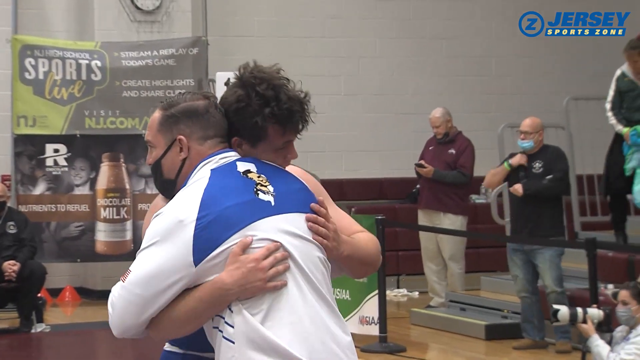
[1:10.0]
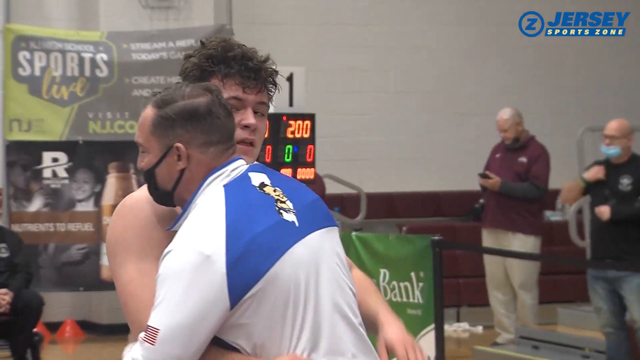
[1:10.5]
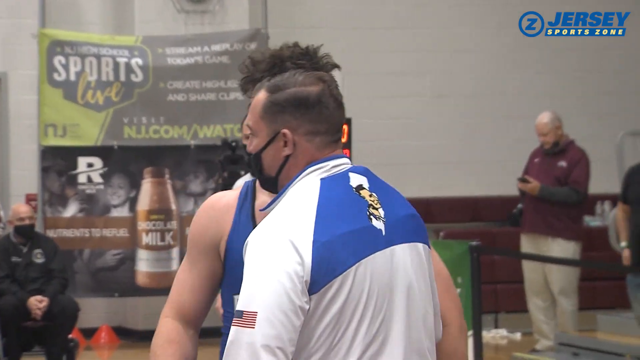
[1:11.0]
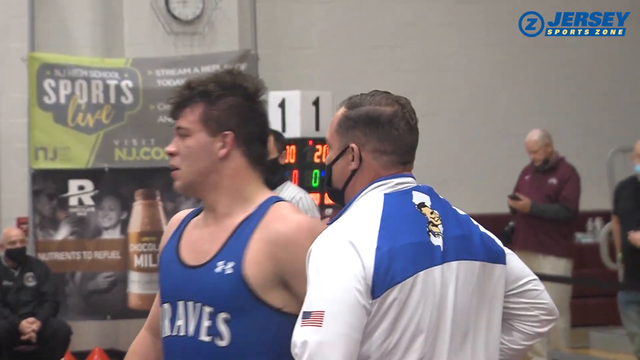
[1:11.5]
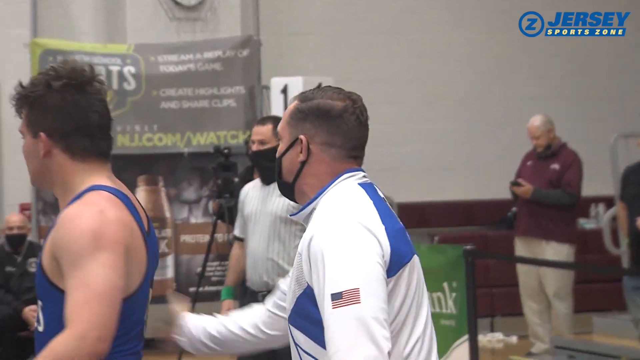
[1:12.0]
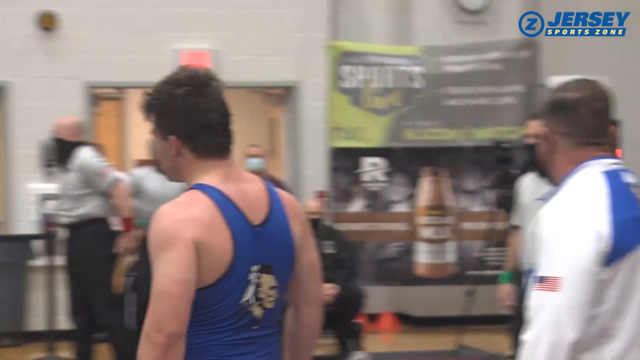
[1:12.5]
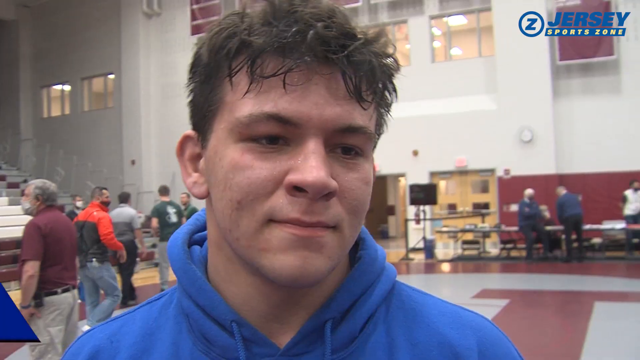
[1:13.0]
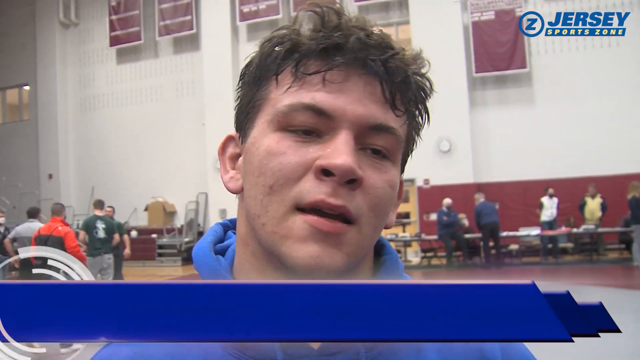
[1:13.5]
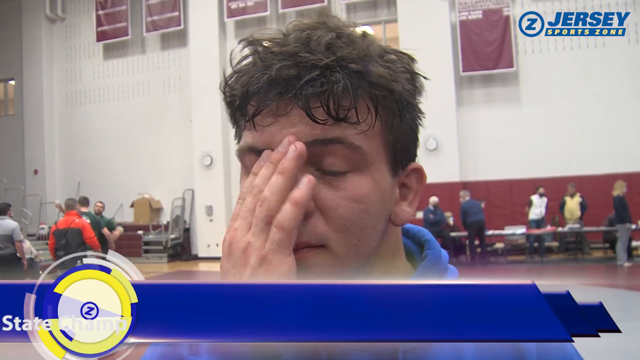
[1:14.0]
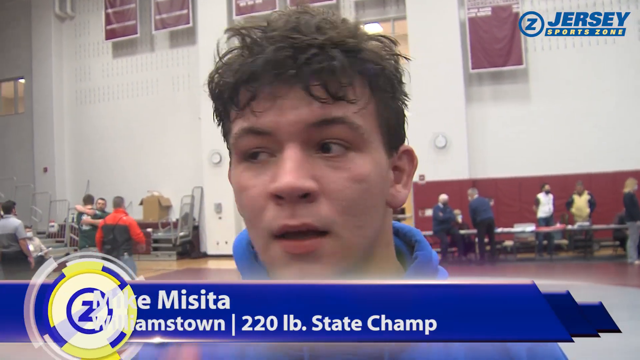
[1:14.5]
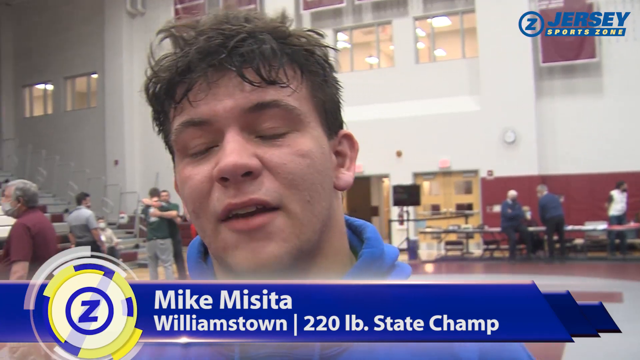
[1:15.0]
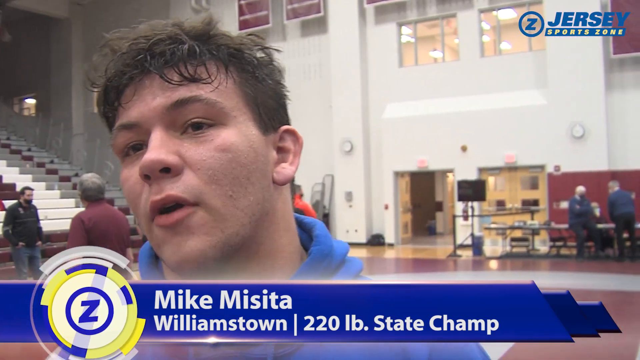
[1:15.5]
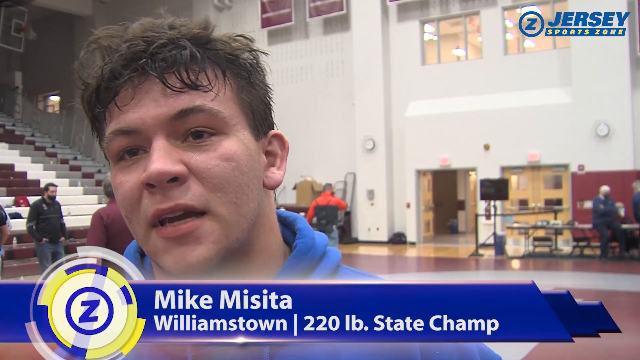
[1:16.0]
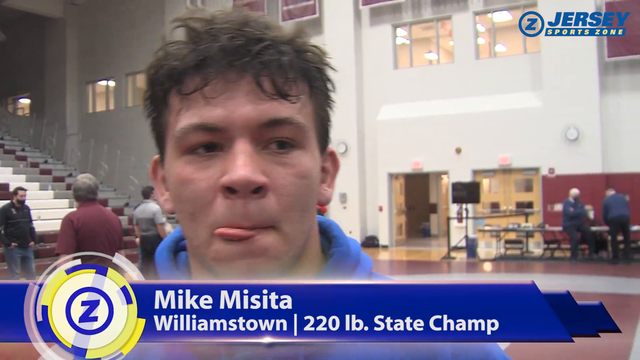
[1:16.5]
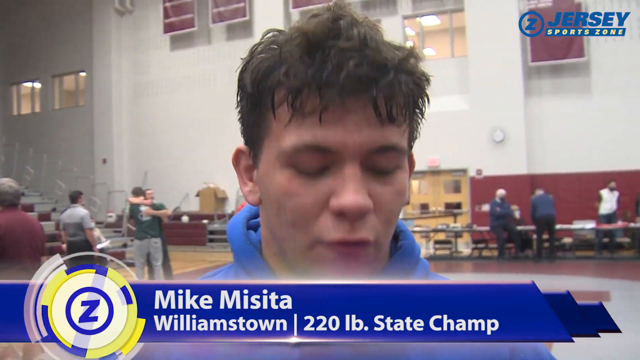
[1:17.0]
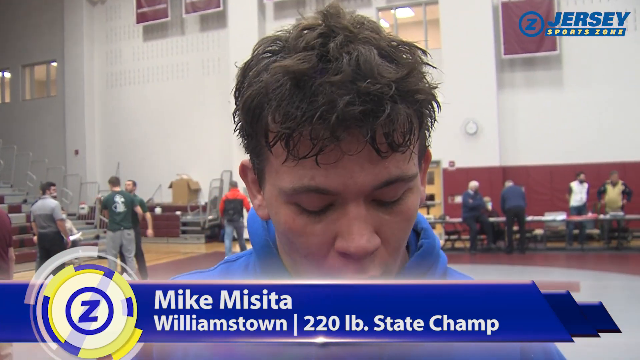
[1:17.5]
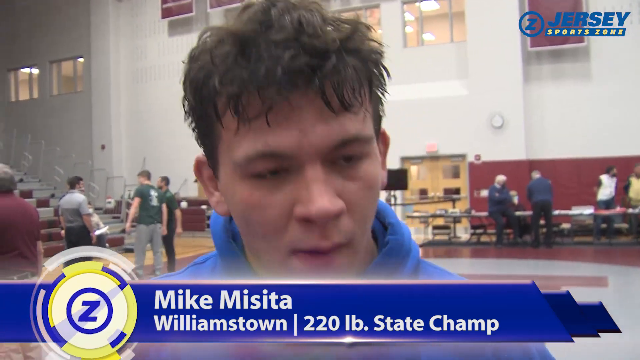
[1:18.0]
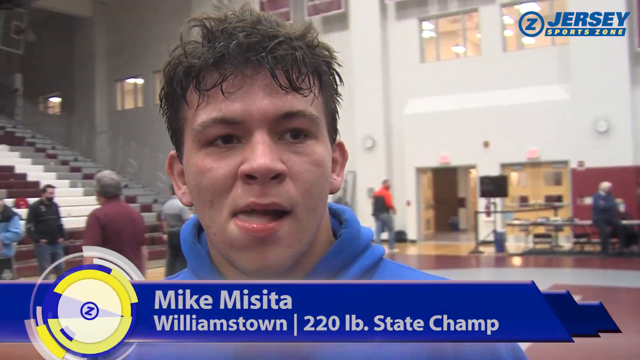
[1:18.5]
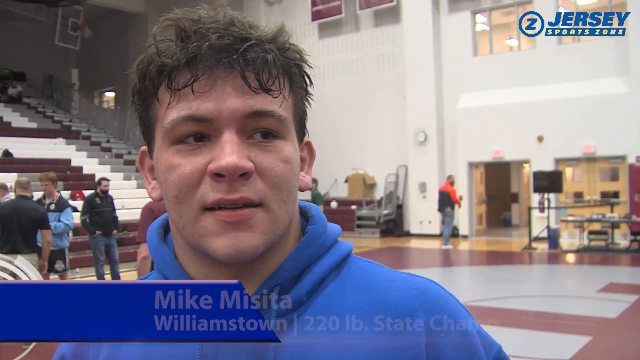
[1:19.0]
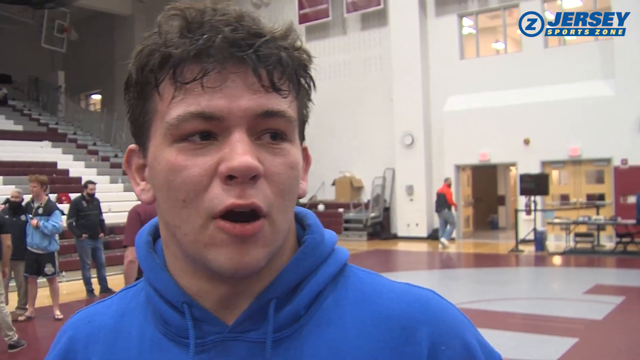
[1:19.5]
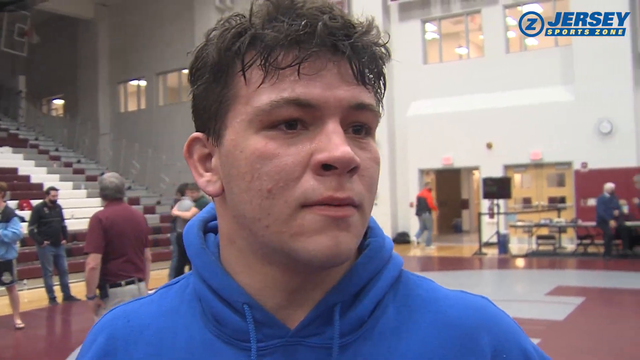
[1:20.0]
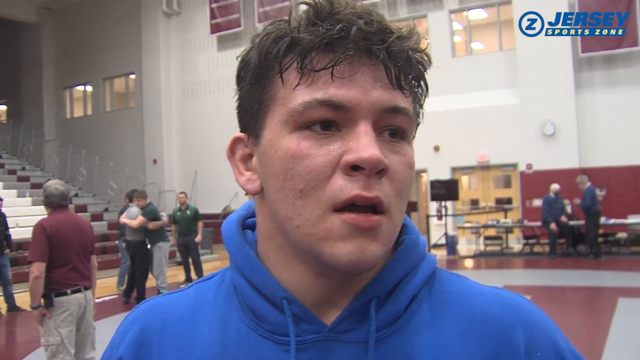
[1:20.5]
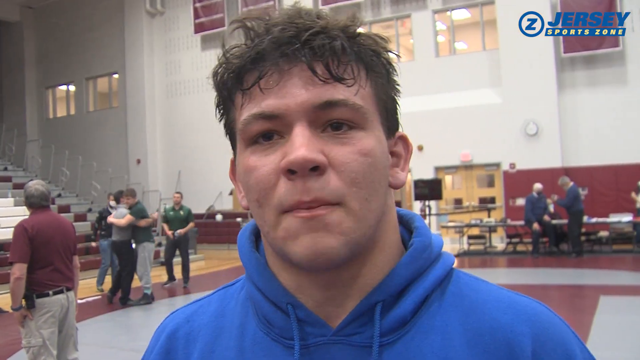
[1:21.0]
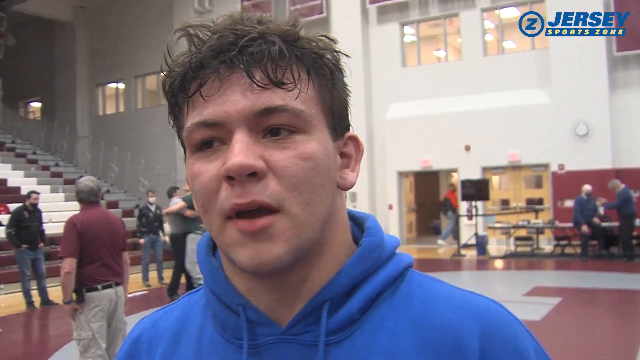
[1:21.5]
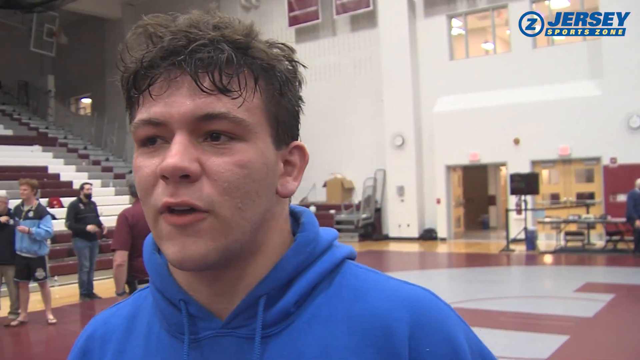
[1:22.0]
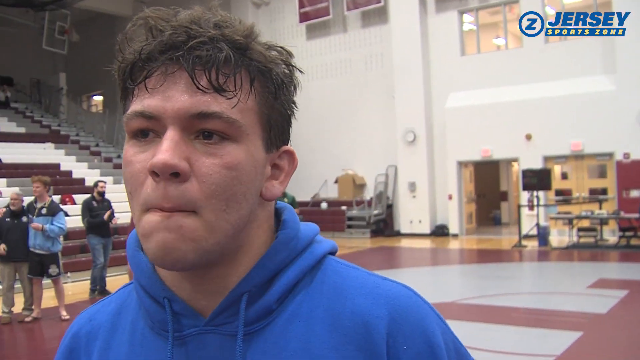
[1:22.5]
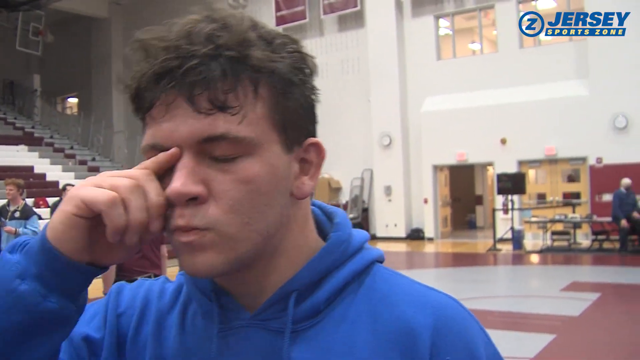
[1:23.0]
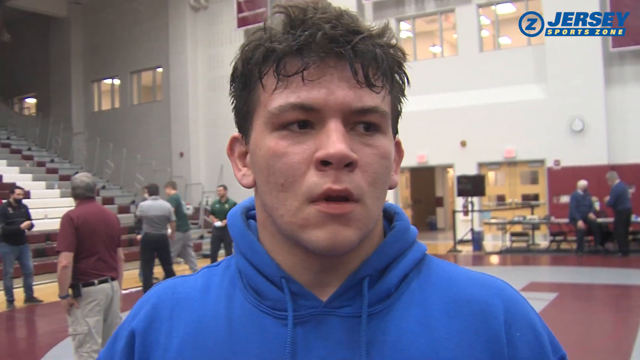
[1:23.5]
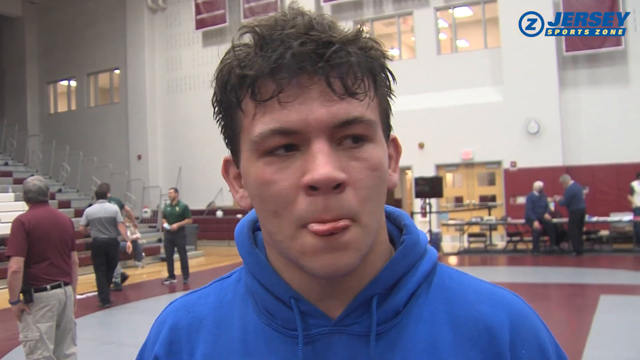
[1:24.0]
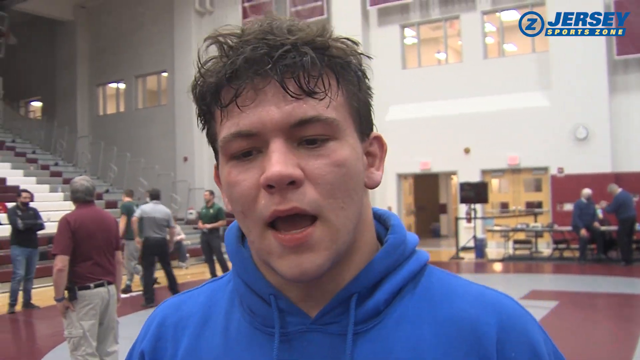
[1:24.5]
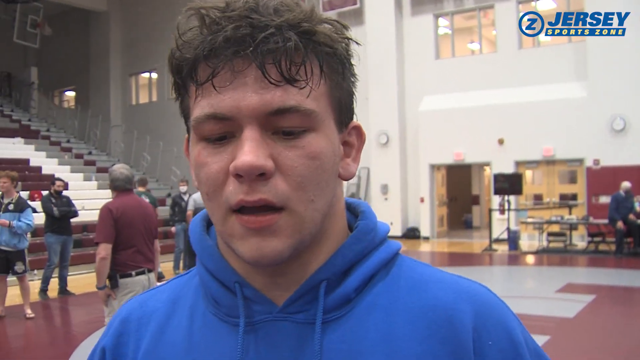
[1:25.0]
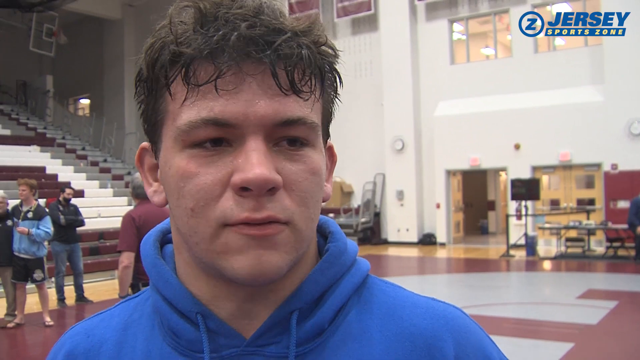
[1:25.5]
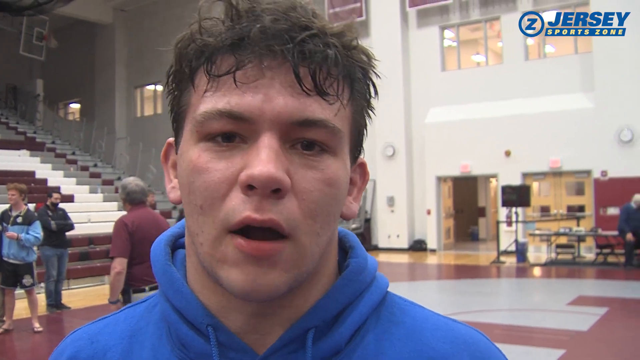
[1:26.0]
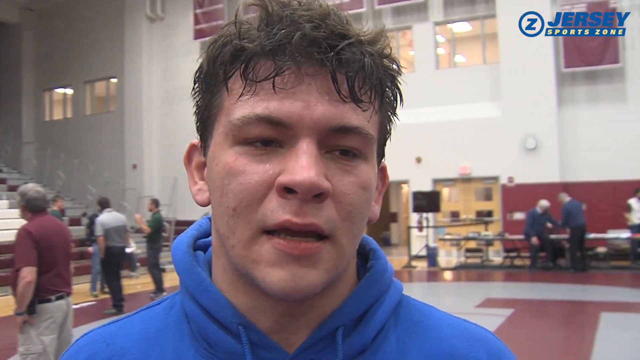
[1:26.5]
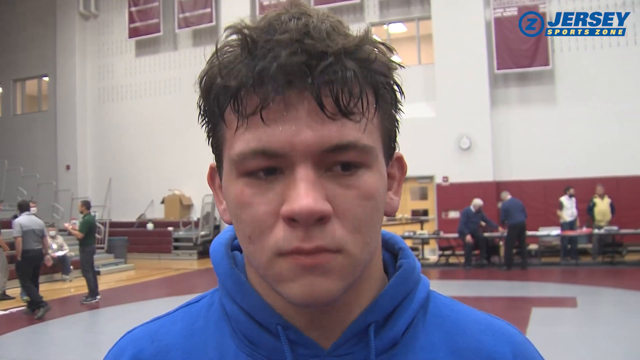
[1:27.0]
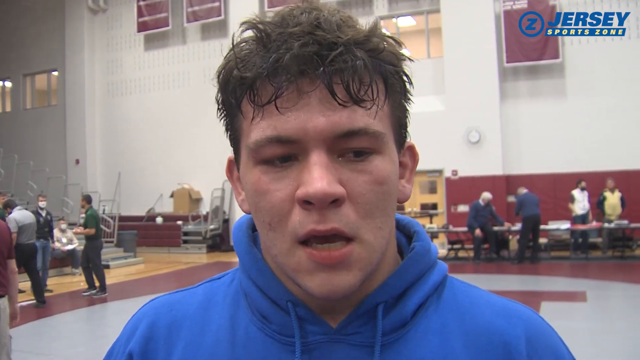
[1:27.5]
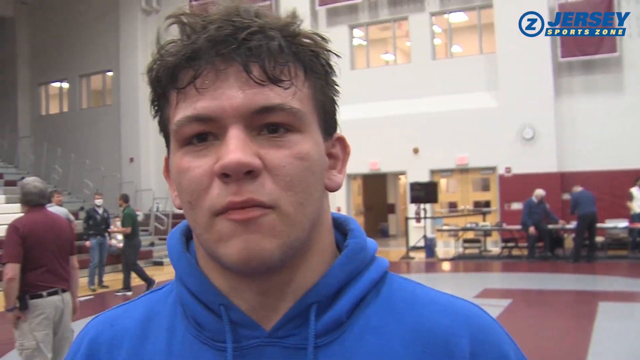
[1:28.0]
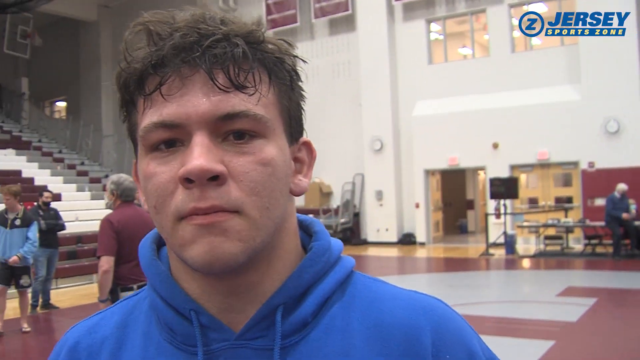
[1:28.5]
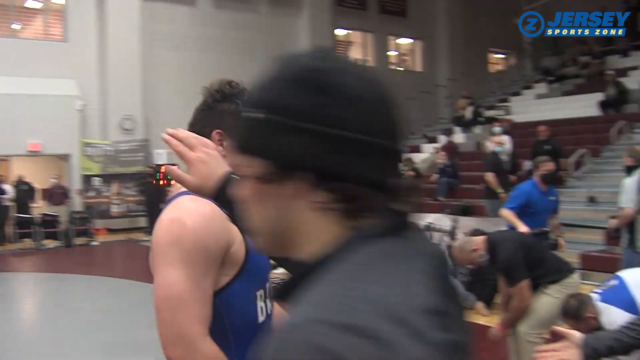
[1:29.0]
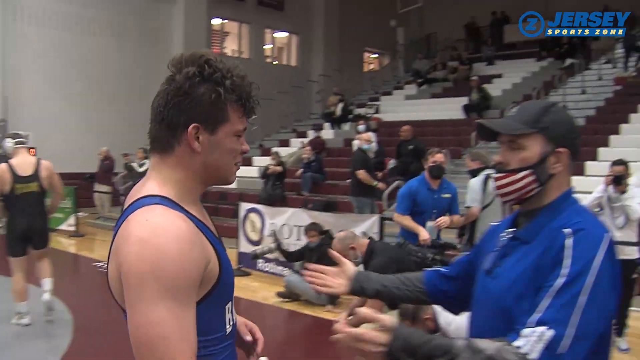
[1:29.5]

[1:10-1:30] The wrestler is hugging the man in the white and blue shirt. The wrestler then walks away, and the man congratulating him, possibly a coach, kind of gives him a pat on the back. The focus shifts to an up-close interview with the wrestler in blue, who apparently won. On-screen text identifies him as Mike Misita from Williamstown, and a bottom banner with a blue background reads "220-pound state champion". Misita talks, kind of moves his tongue along the bottom of his lip, and continues talking. His hair is tousled and he is kind of sweaty. He wipes his eye with the pointer finger of his right hand and keeps talking to whoever is interviewing him. He is then shown walking away and engaging with the man in a blue shirt. A "Jersey Sports Zone" logo in blue italic letters, with a Z and a circle to its left, is in the top right-hand corner of the screen at all times.